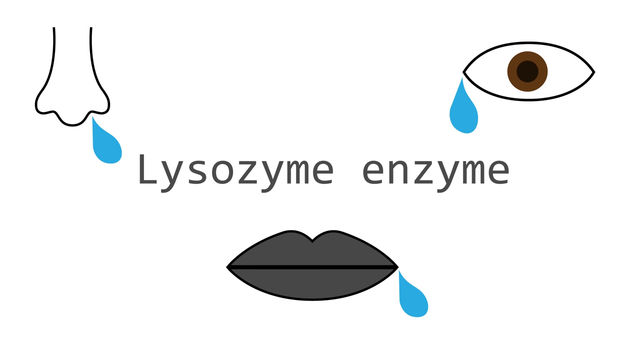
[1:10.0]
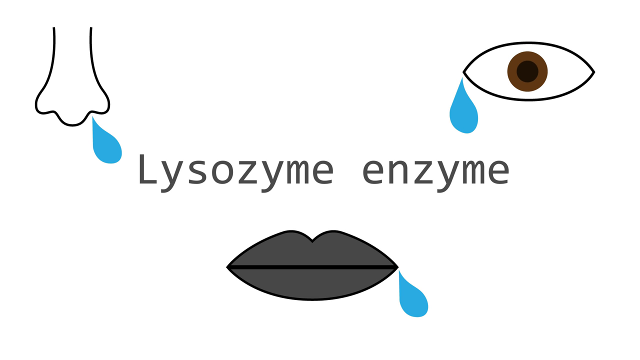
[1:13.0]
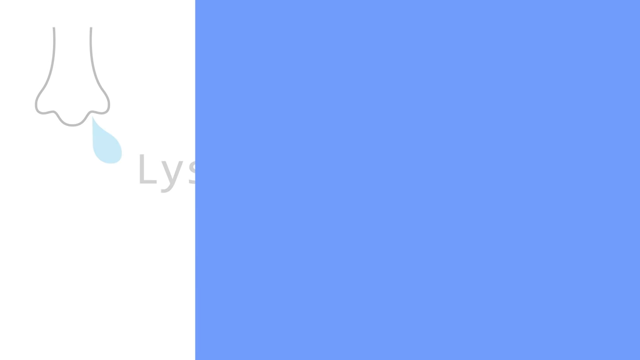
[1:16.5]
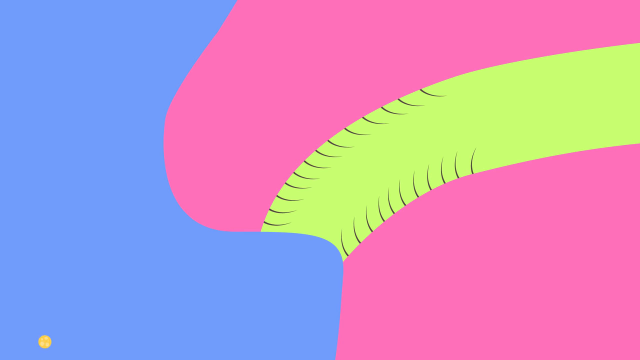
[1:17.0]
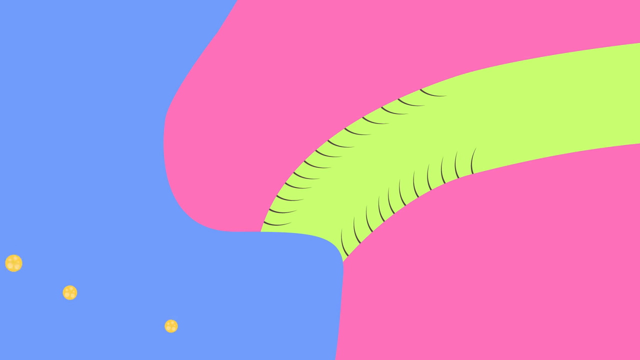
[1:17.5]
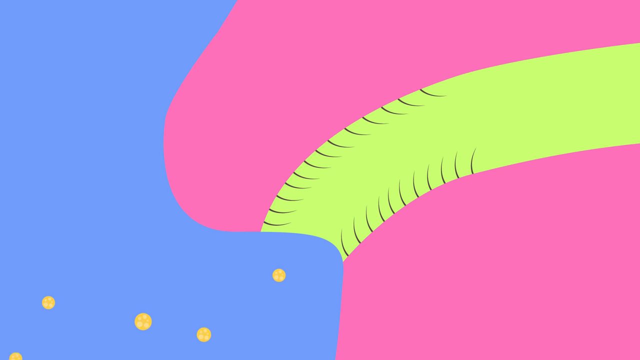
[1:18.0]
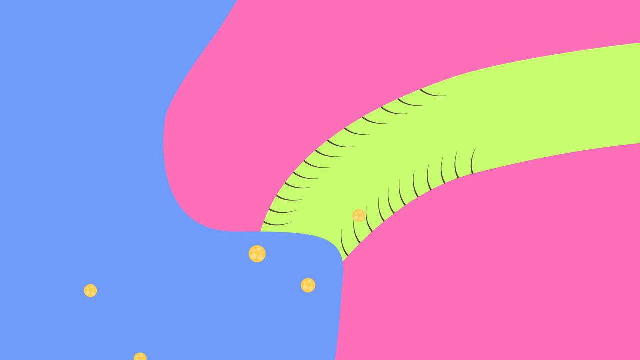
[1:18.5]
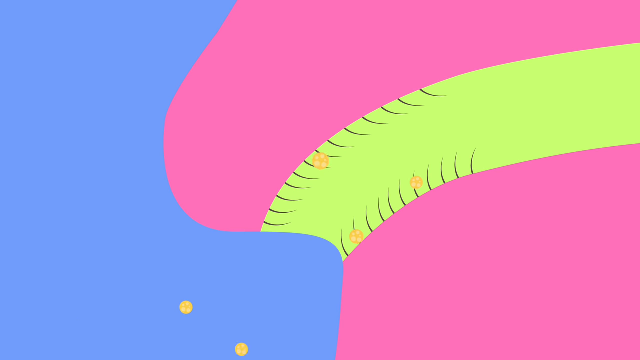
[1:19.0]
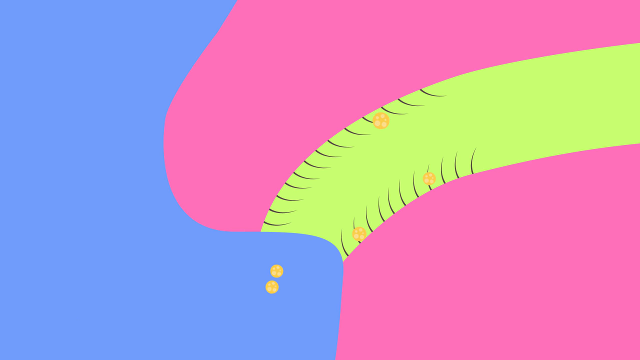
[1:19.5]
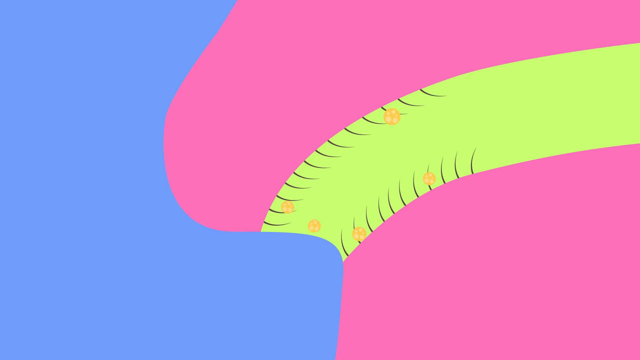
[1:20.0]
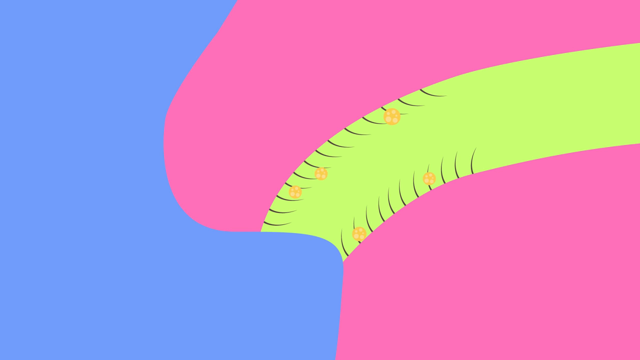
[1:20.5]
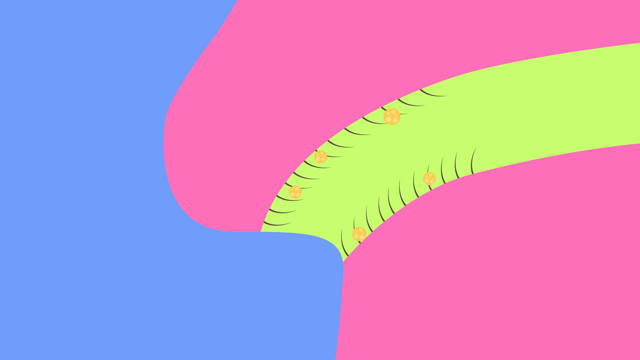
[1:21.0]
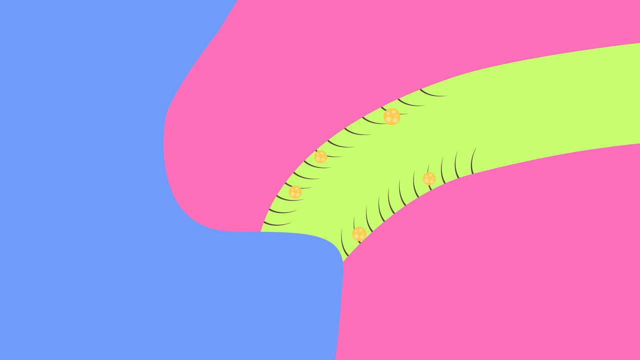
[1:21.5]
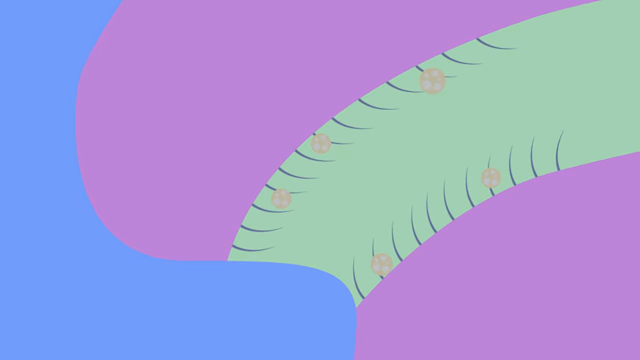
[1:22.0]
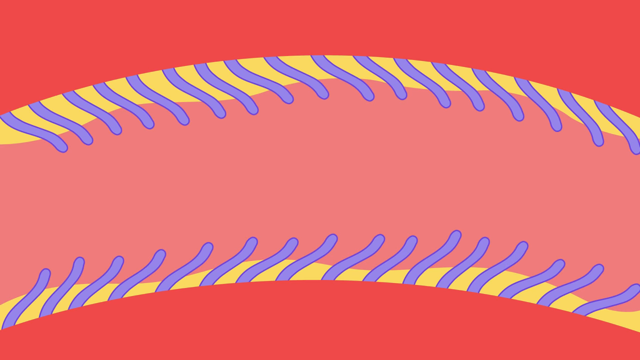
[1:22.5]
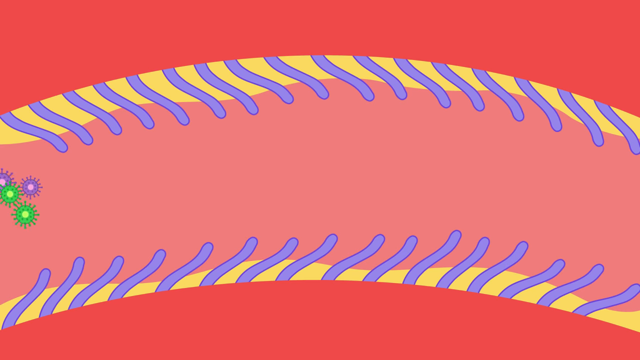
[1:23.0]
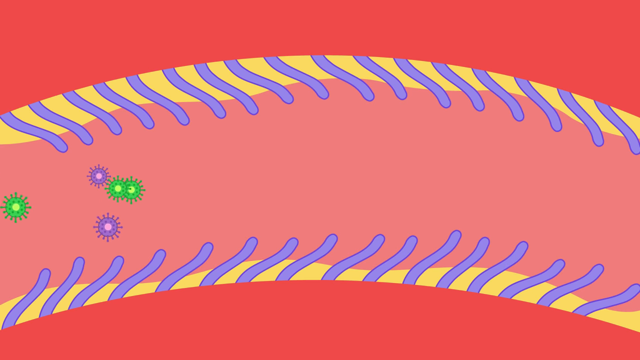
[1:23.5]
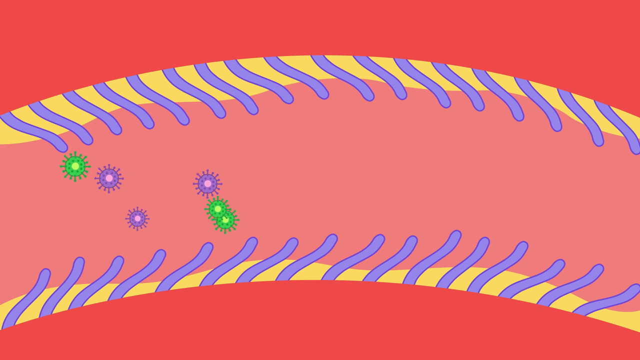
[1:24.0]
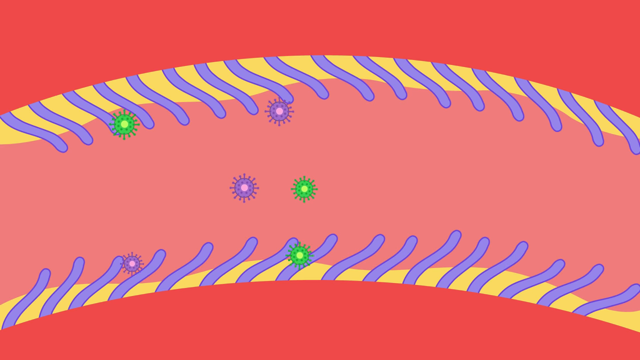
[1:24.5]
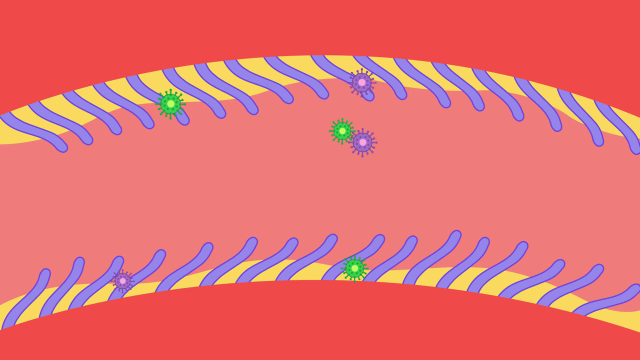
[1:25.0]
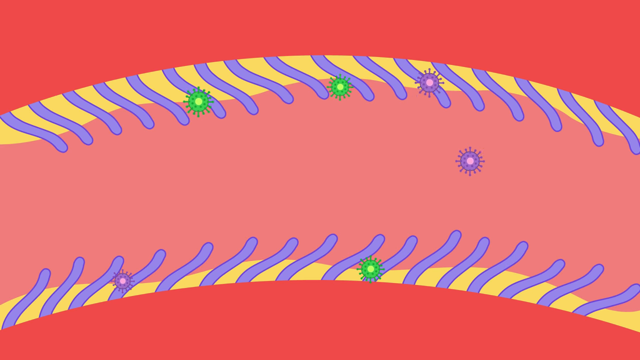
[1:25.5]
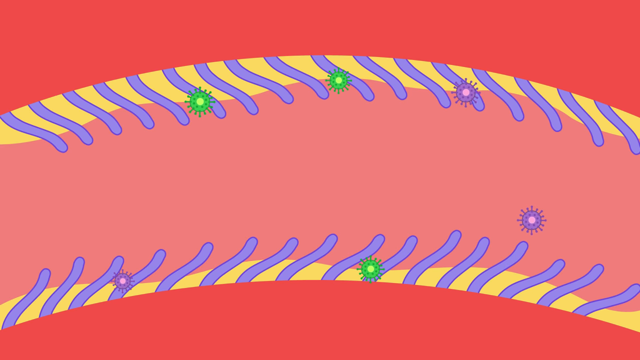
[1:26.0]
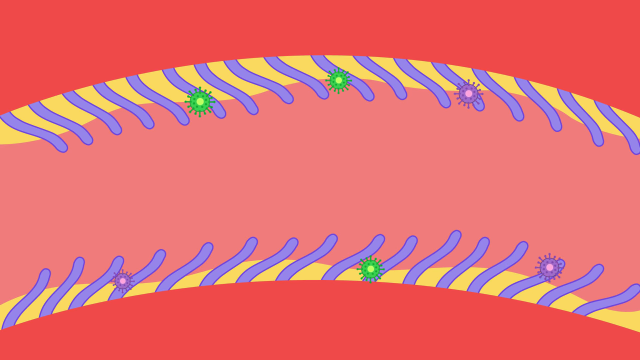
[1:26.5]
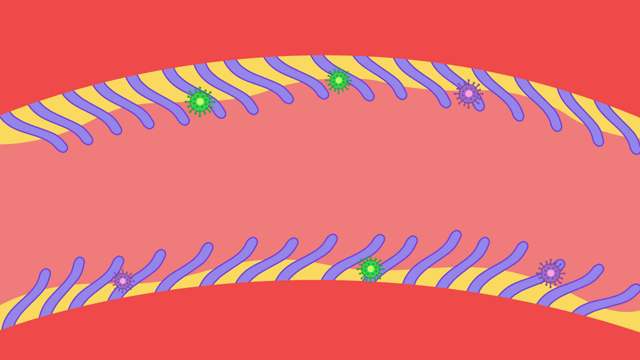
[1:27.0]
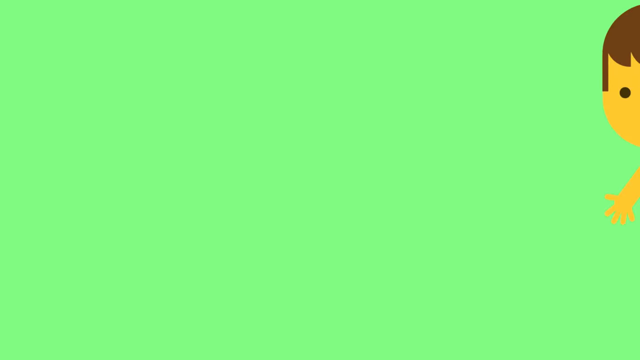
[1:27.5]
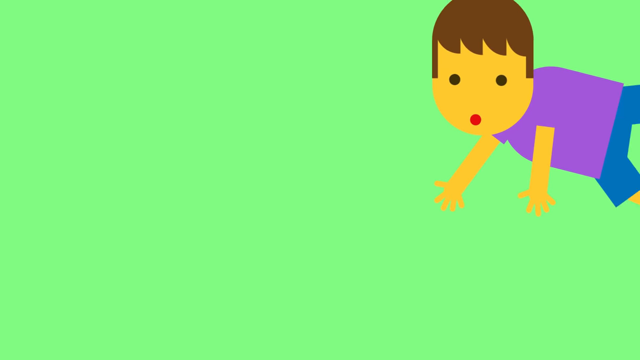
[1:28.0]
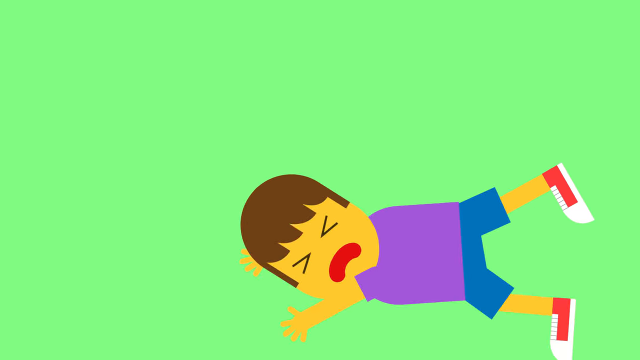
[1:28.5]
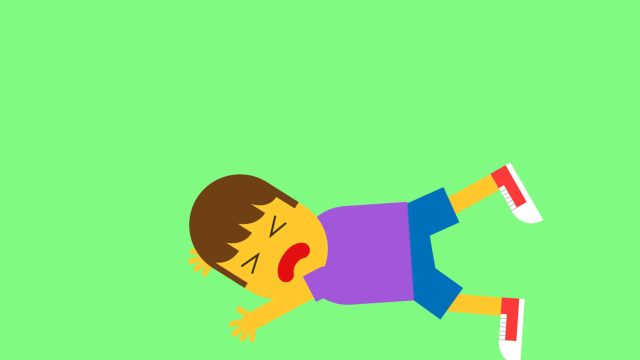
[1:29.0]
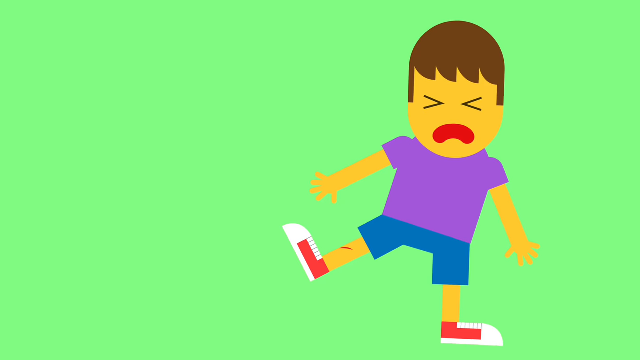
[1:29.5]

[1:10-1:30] The video continues from the lysozyme scene with the nose and mouth. Glands are shown blocking something from entering, illustrating how glands protect the body. A child is running and falls, apparently scratching a leg; there is a scratch and it is bleeding.